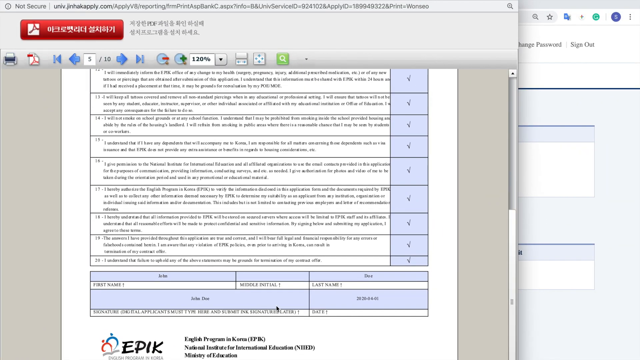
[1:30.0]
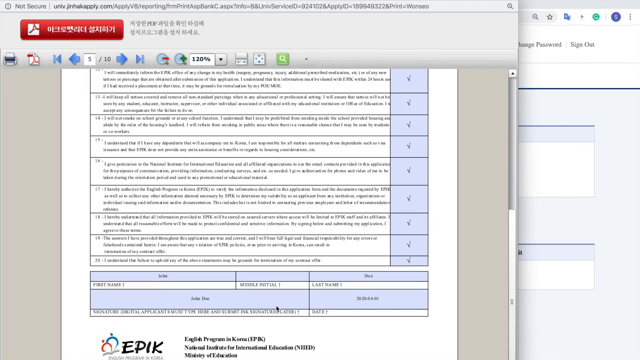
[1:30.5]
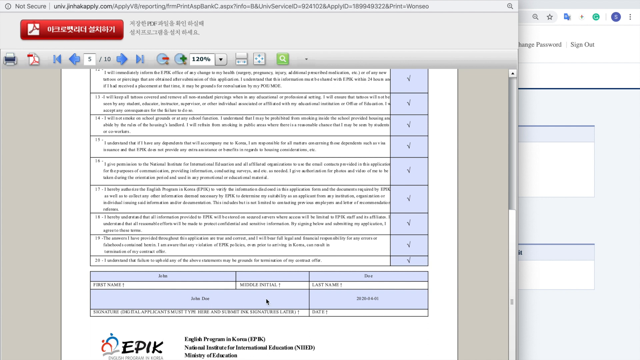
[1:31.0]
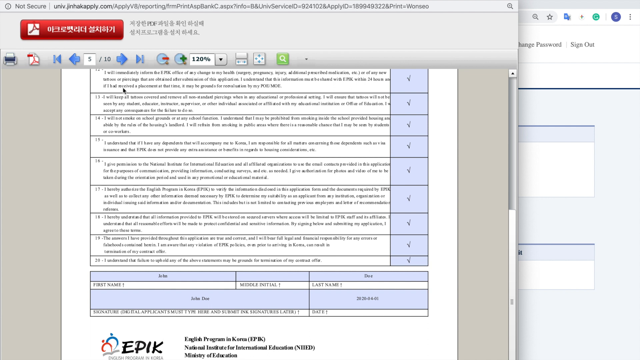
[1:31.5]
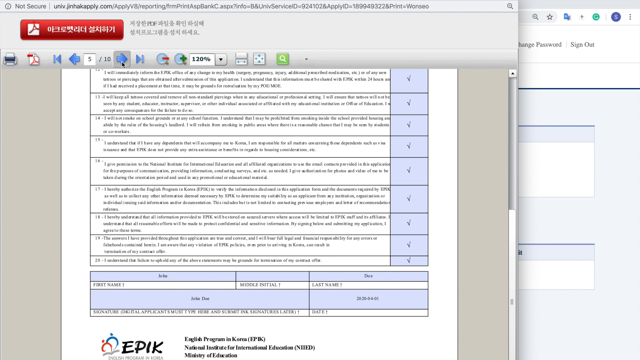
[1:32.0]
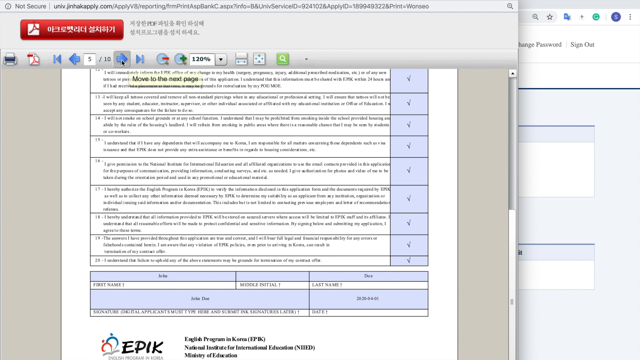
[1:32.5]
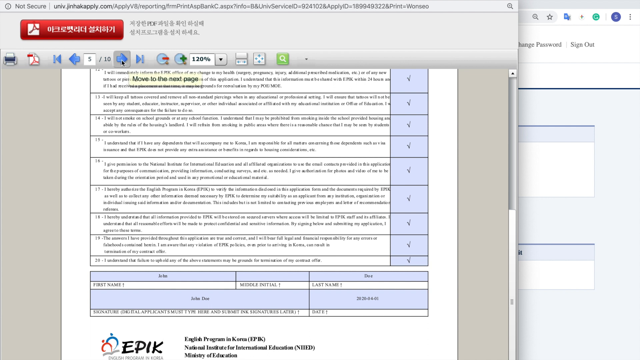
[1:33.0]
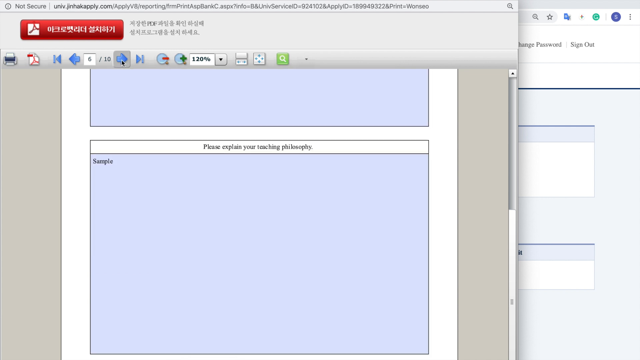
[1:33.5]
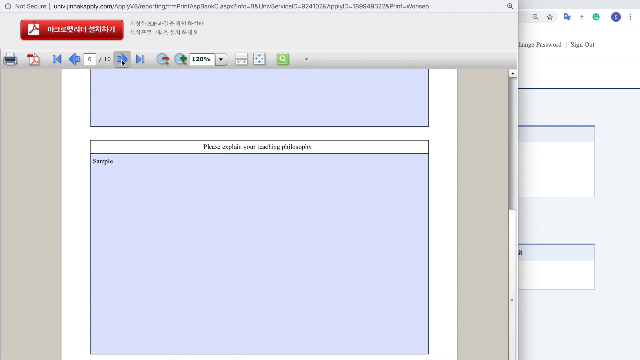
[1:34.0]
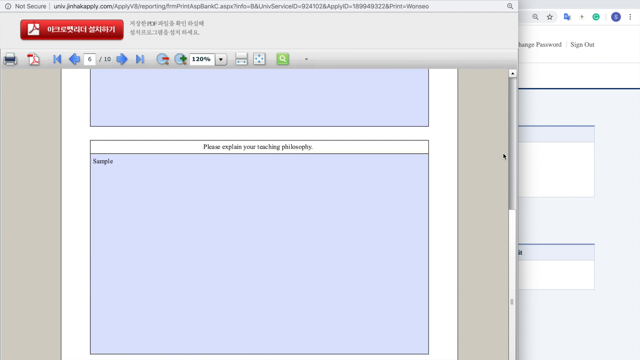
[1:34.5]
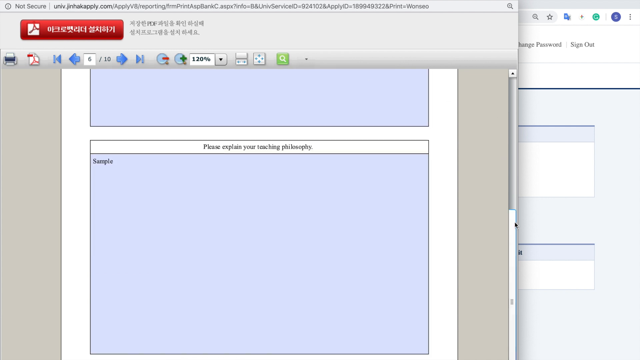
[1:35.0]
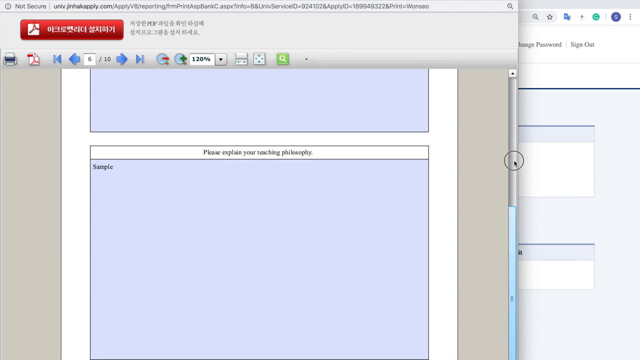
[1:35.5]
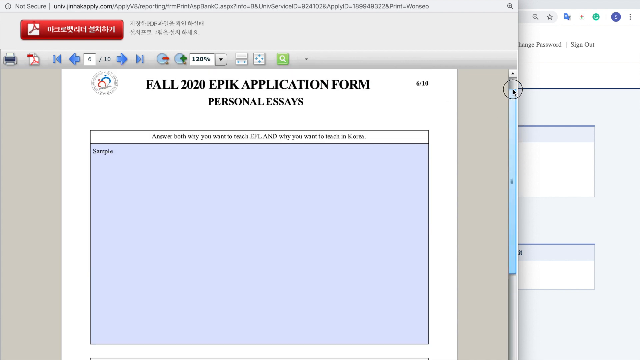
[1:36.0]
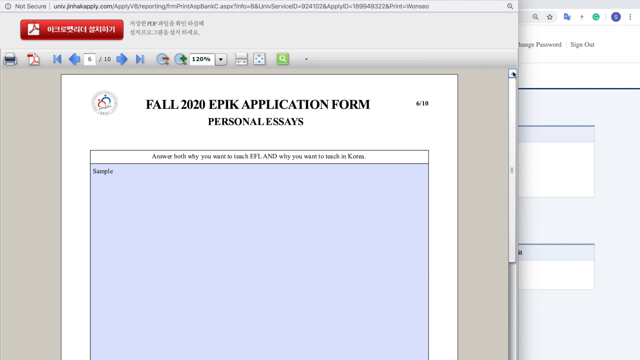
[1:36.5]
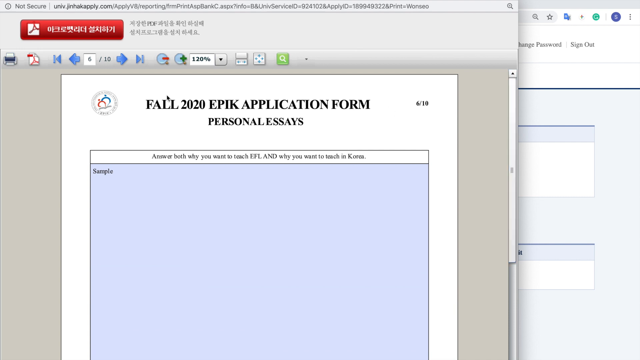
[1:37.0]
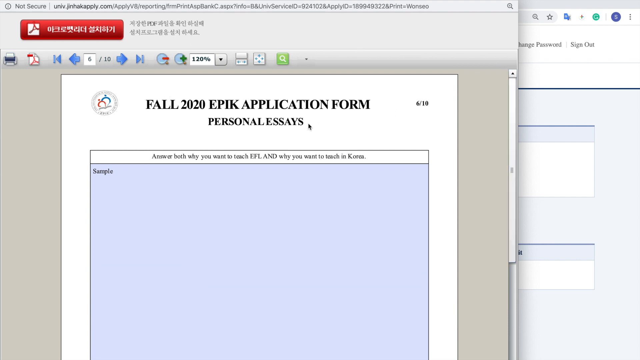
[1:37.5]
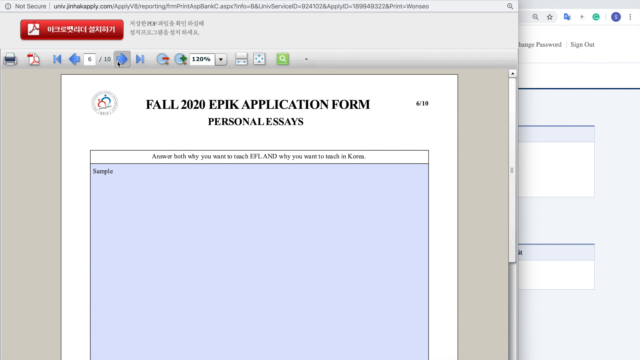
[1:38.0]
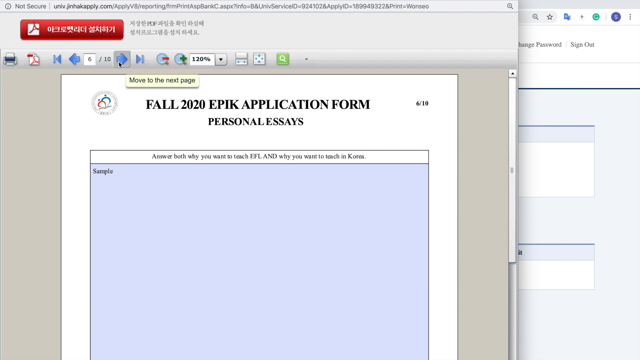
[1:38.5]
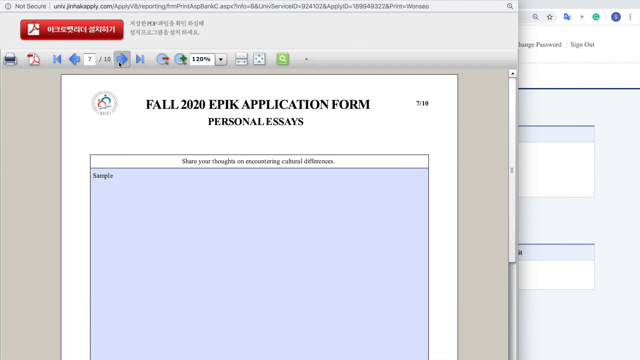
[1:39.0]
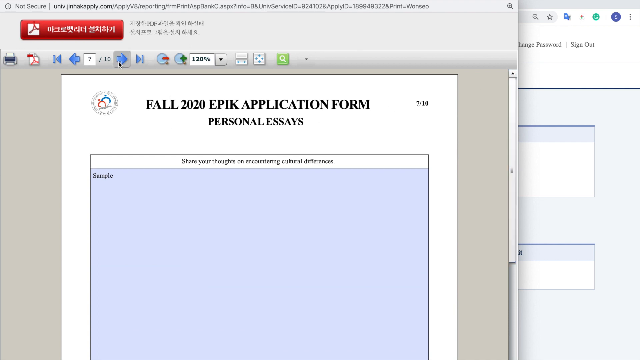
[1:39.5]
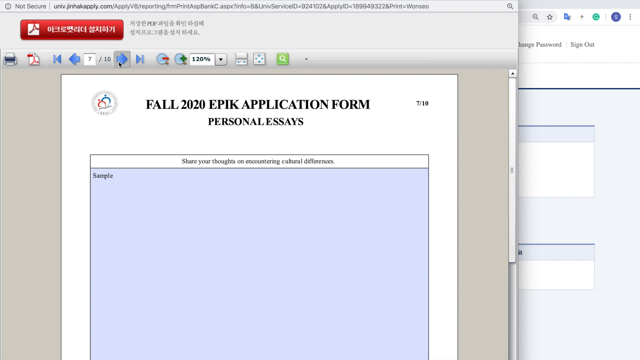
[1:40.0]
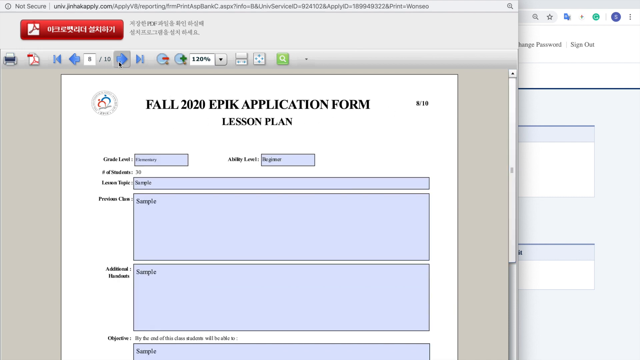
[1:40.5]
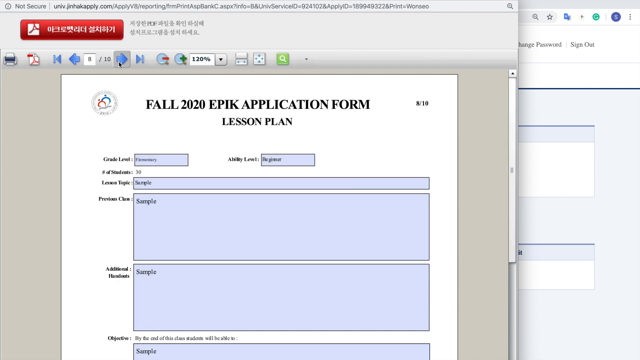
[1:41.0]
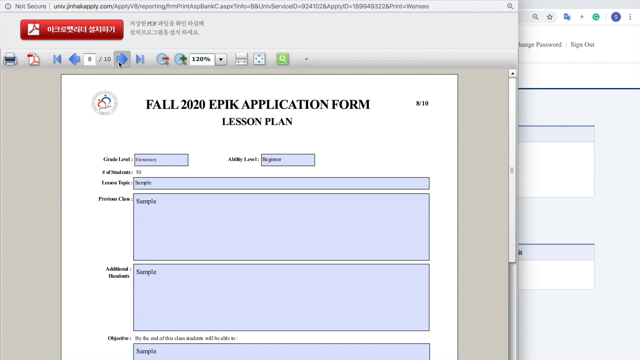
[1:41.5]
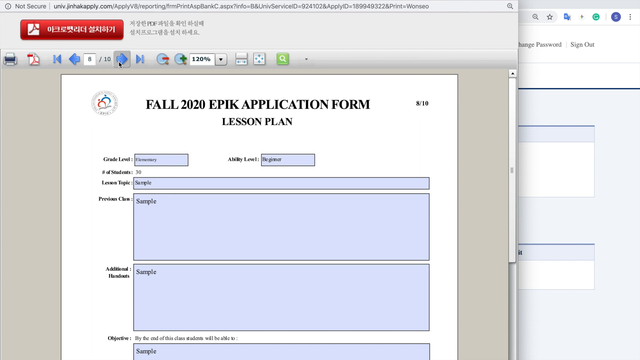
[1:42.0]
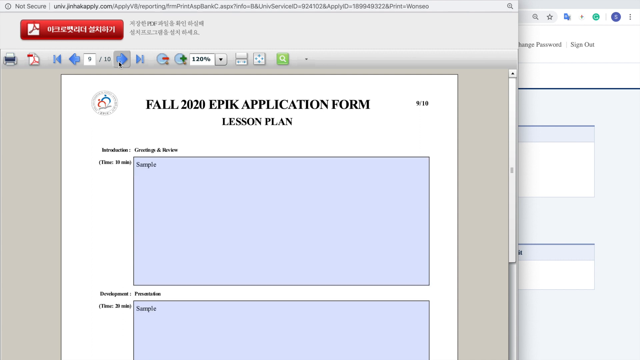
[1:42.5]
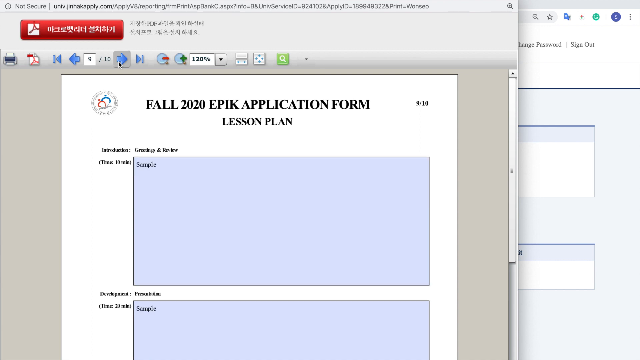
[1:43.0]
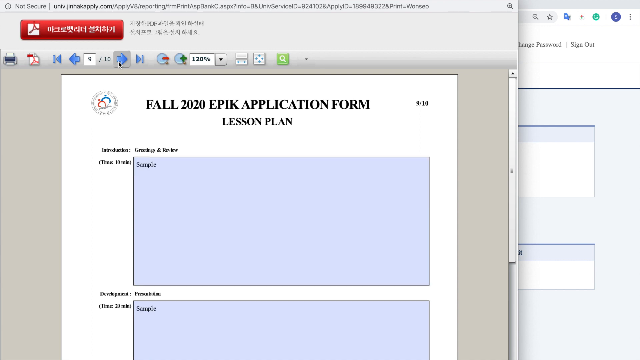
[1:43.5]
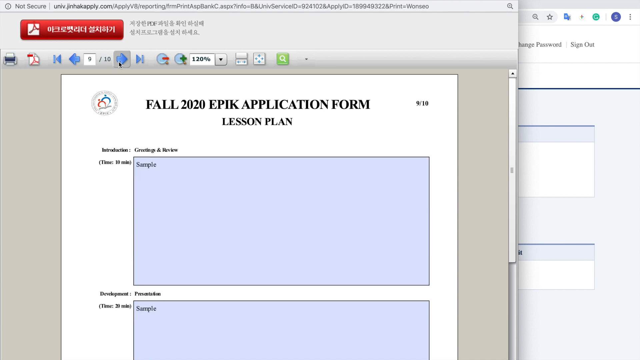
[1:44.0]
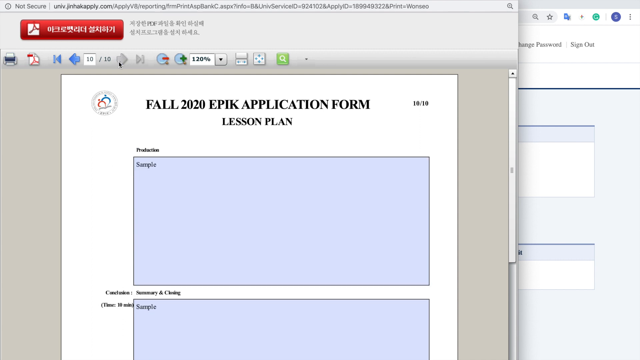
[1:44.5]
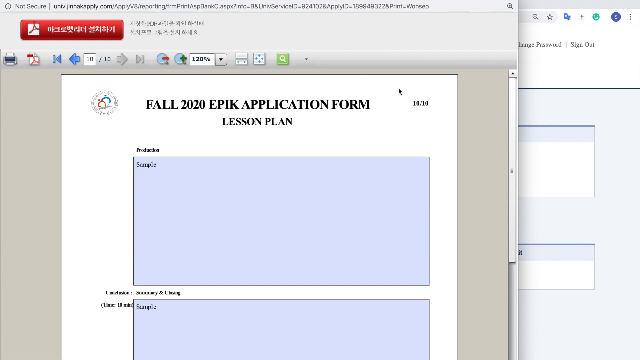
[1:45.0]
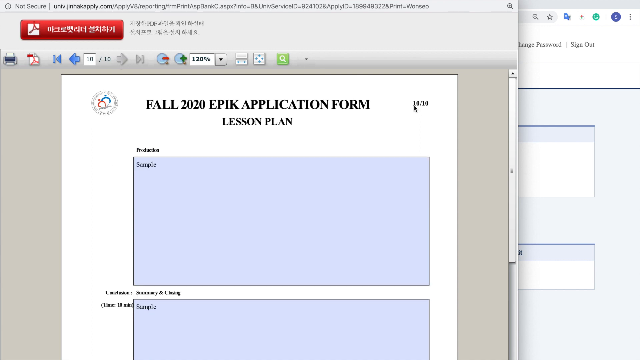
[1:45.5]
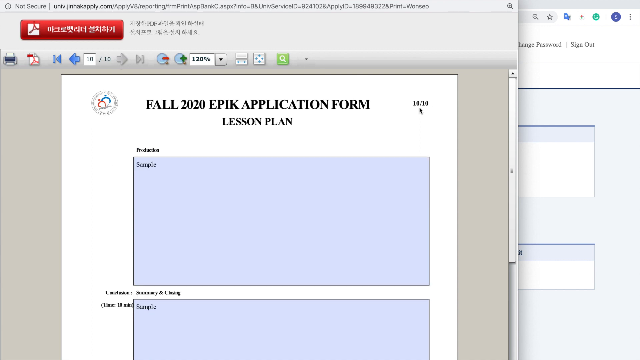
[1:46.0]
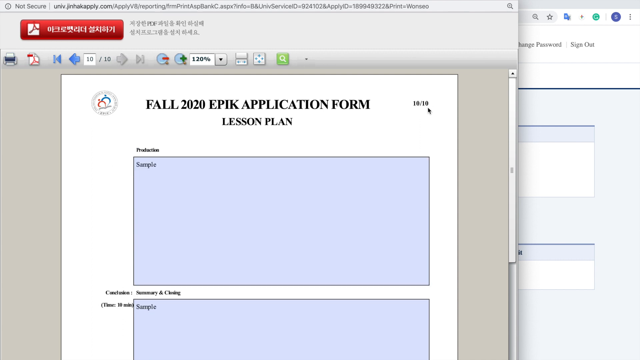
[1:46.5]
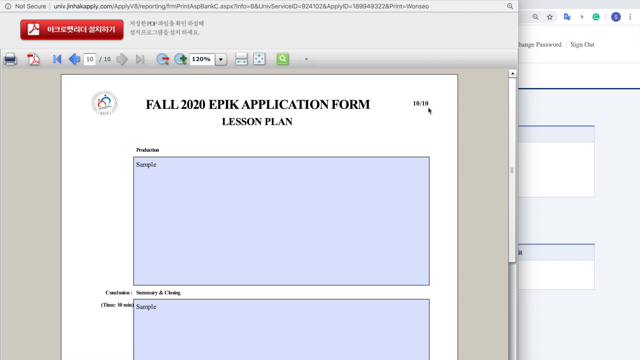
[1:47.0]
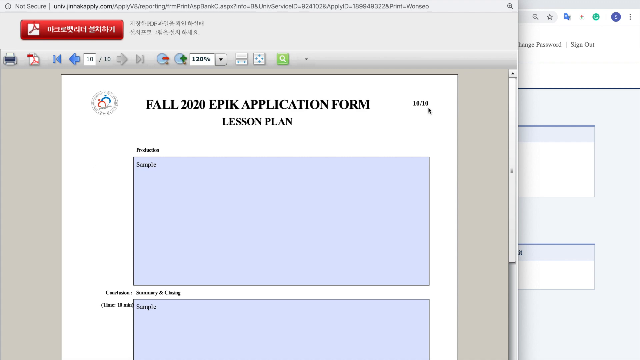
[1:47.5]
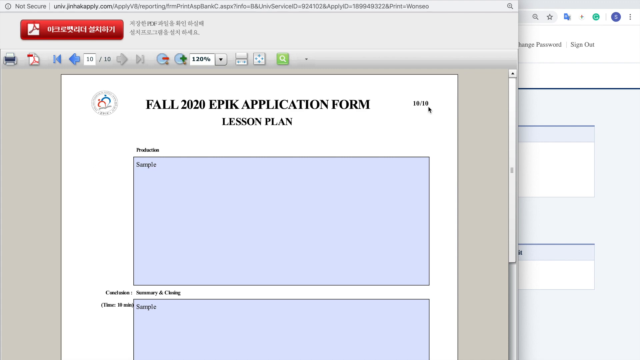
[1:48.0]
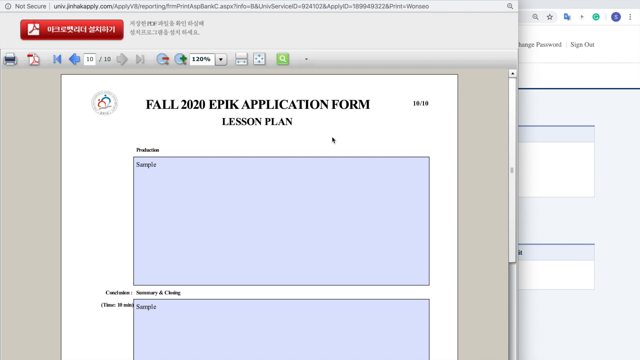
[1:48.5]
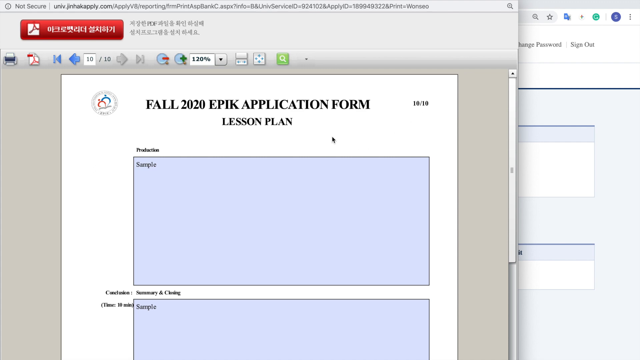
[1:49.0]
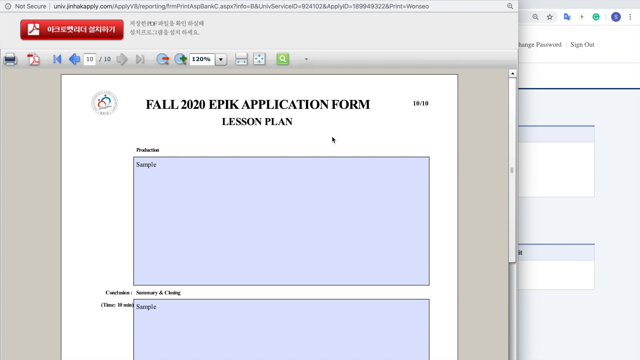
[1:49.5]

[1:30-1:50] The EPIK Fall 2020 online application continues through its different sections, after the 20 checked agreements with the policies. There is a place to write why you want to teach in Korea, part of a set of personal essays, and one for thoughts on encountering cultural differences. A lesson plan section has fields for grade/ability level, number of students, topic, previous class, additional and so on, with a place for the objective at the bottom.